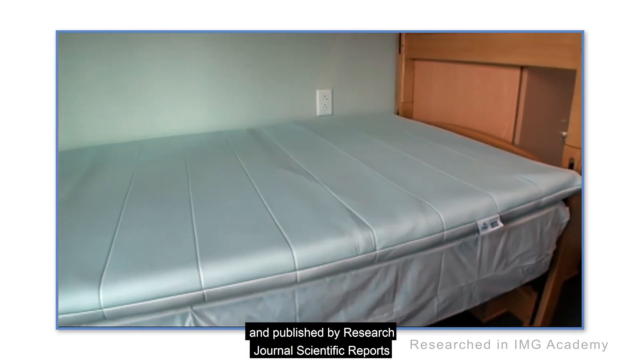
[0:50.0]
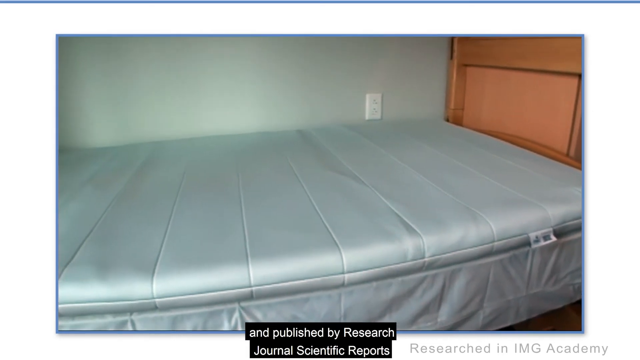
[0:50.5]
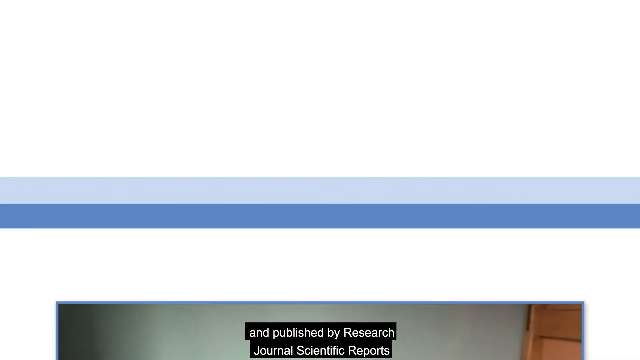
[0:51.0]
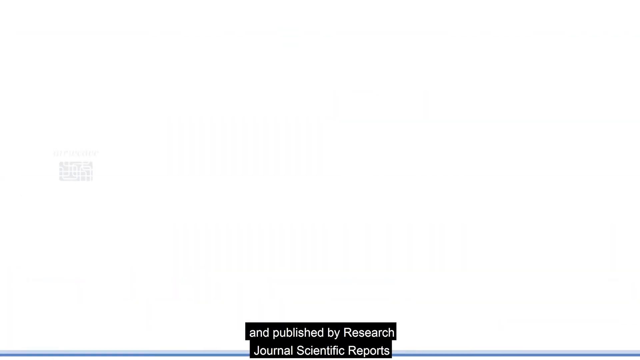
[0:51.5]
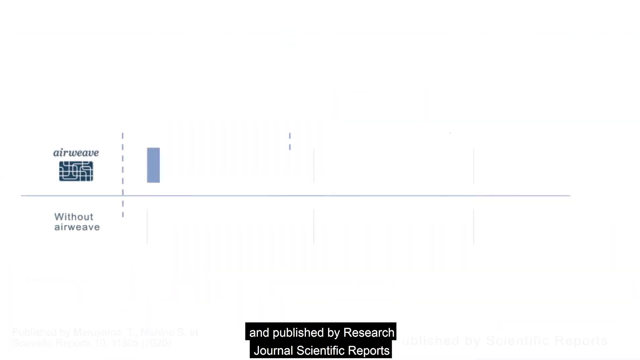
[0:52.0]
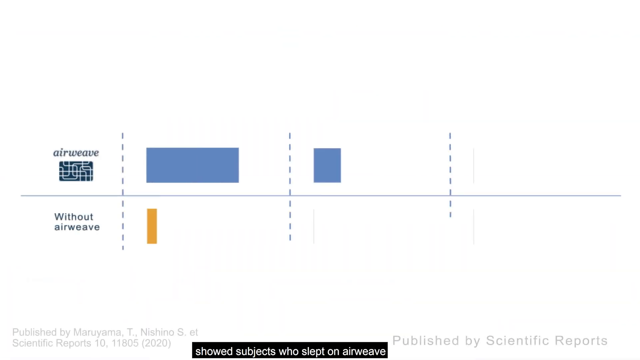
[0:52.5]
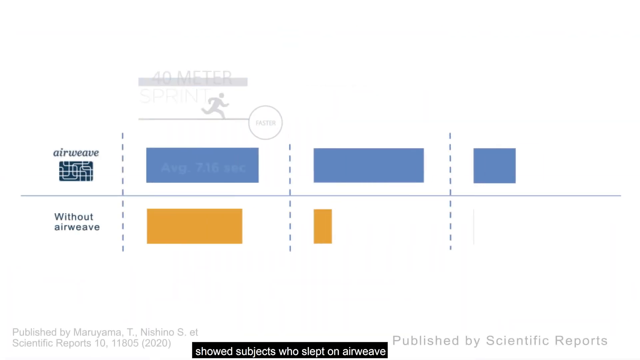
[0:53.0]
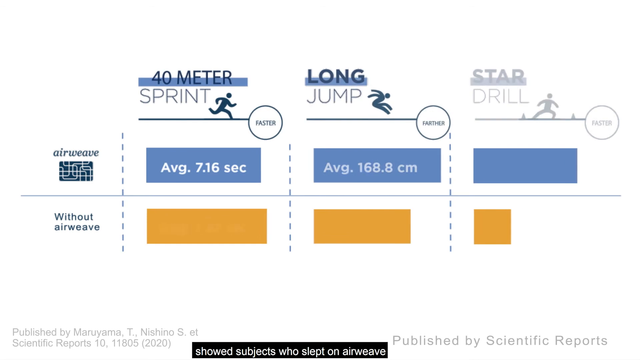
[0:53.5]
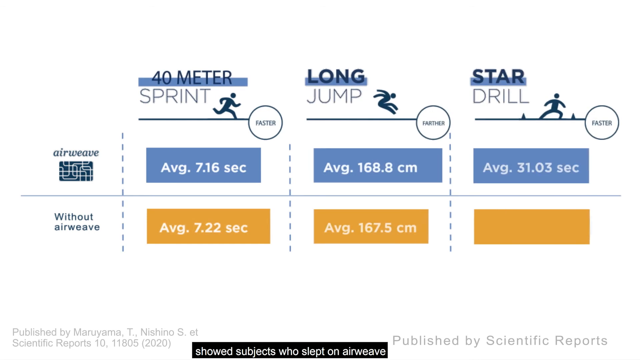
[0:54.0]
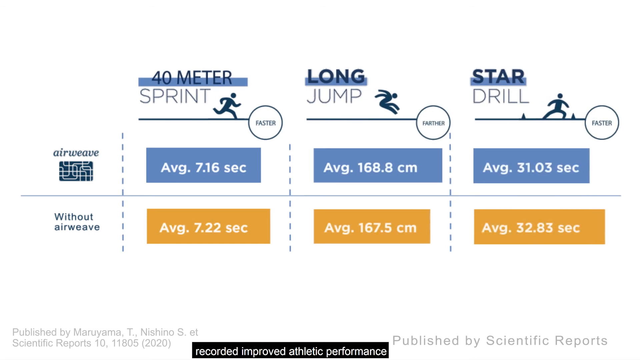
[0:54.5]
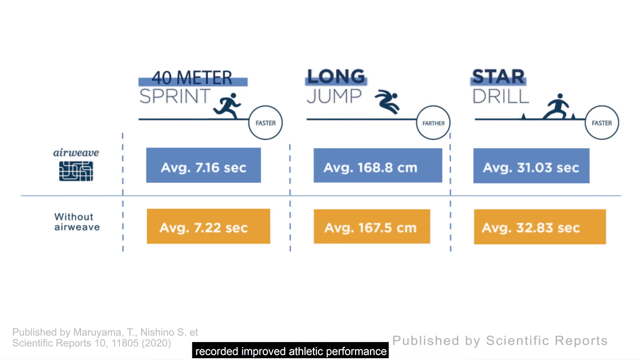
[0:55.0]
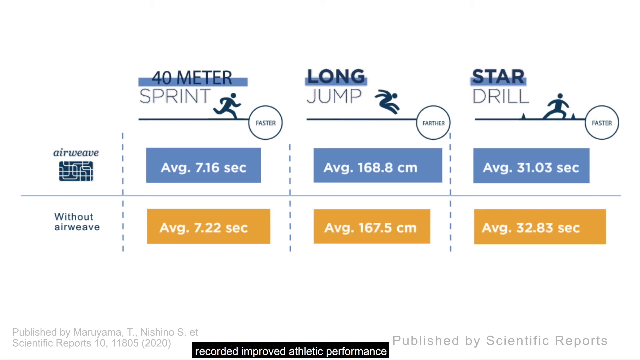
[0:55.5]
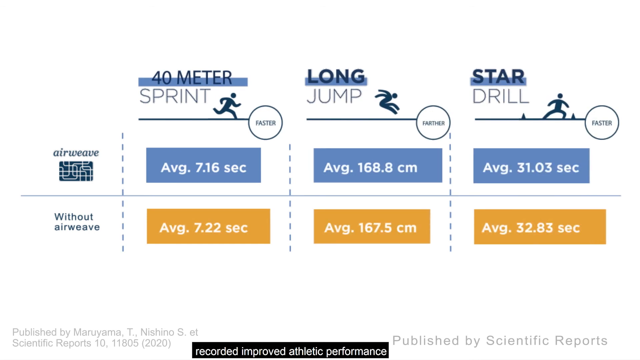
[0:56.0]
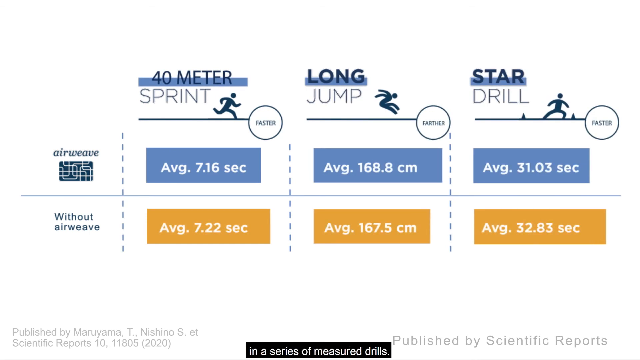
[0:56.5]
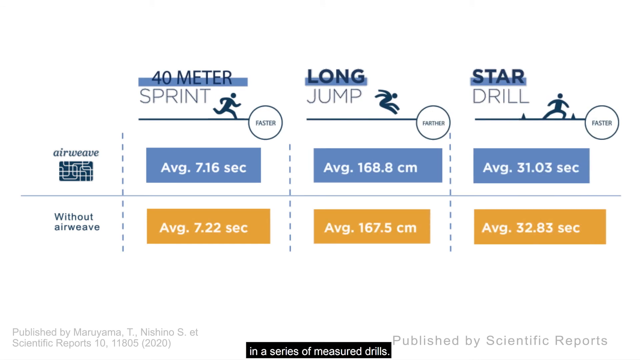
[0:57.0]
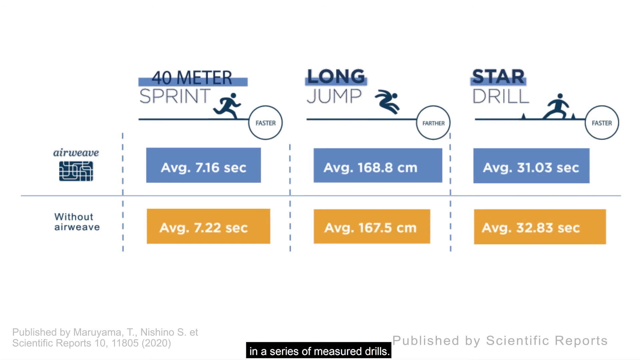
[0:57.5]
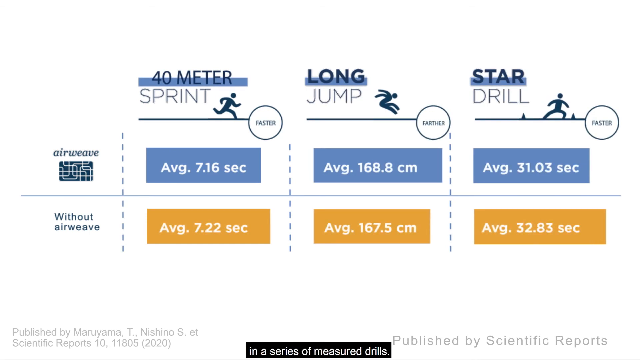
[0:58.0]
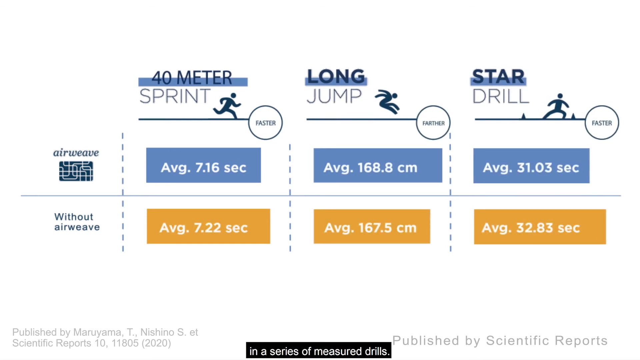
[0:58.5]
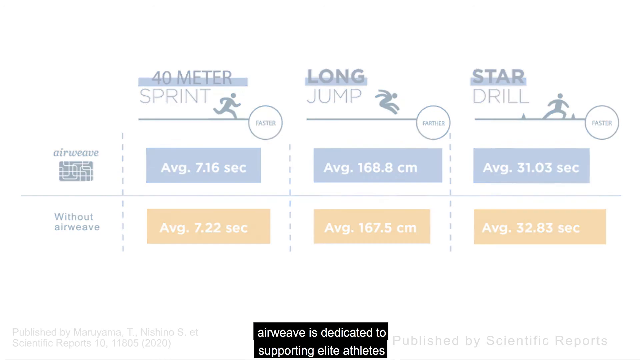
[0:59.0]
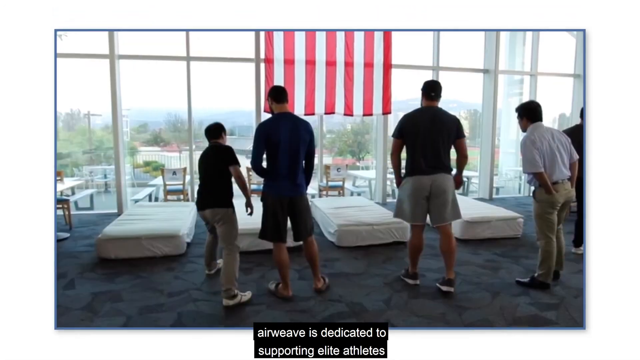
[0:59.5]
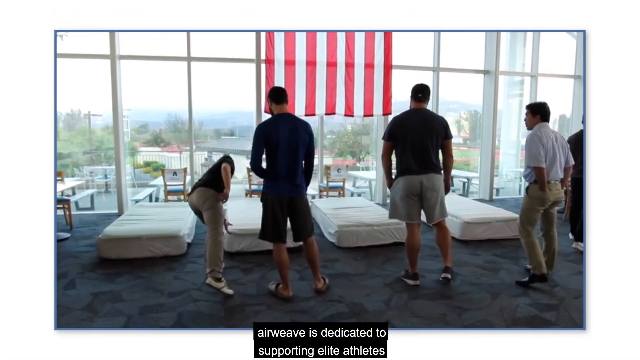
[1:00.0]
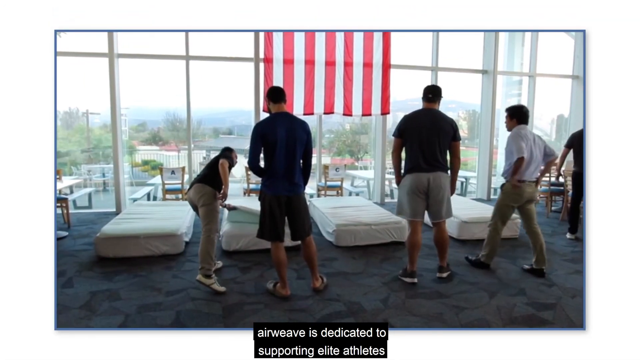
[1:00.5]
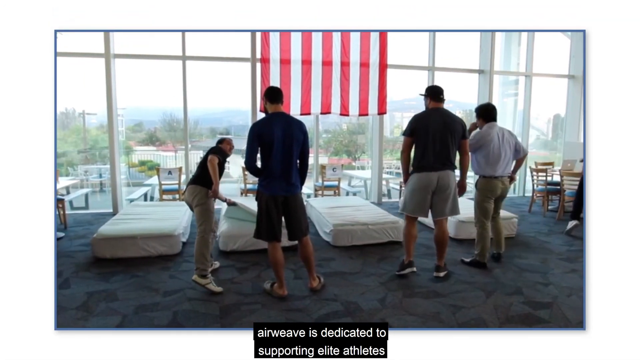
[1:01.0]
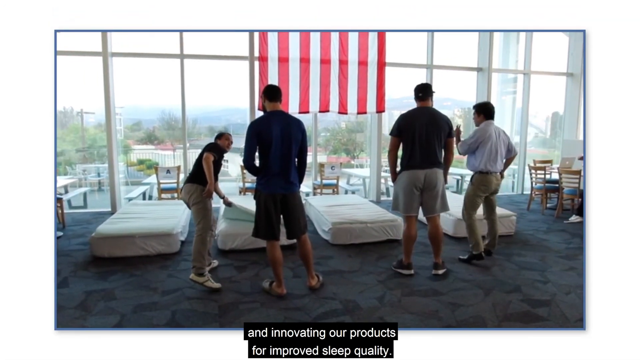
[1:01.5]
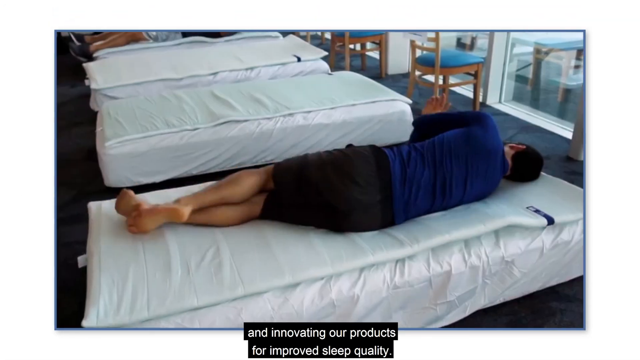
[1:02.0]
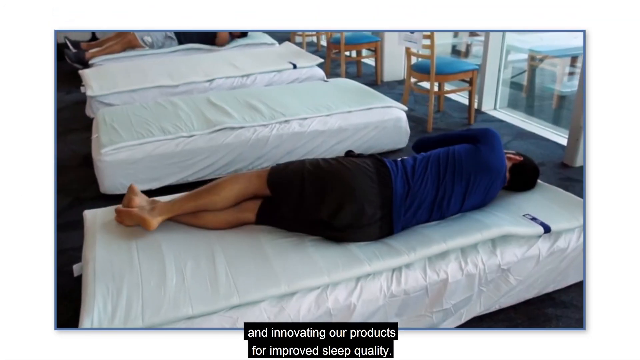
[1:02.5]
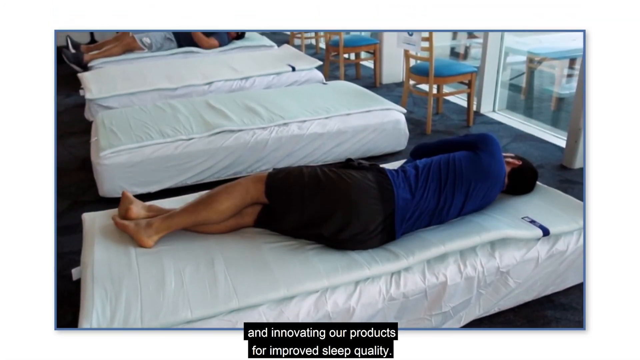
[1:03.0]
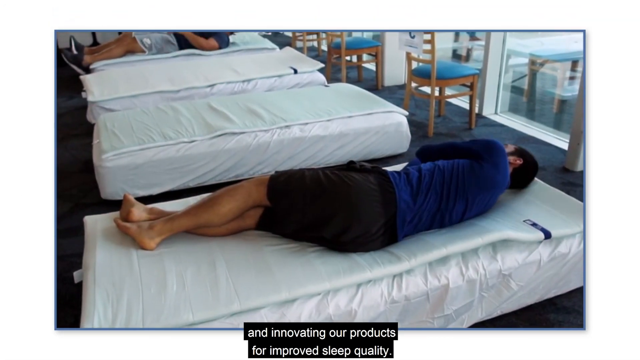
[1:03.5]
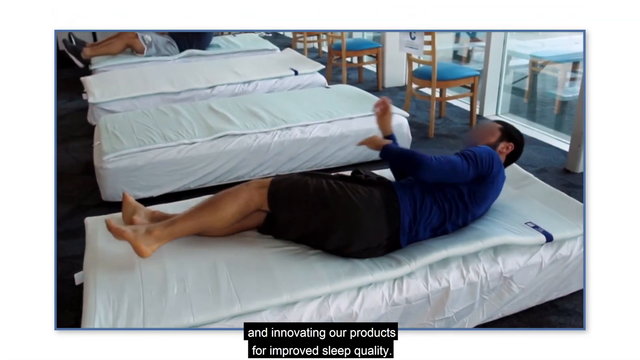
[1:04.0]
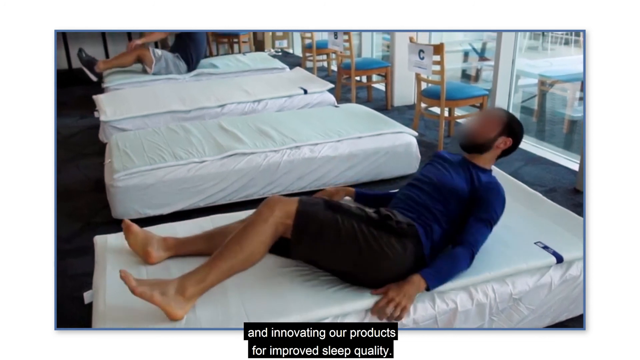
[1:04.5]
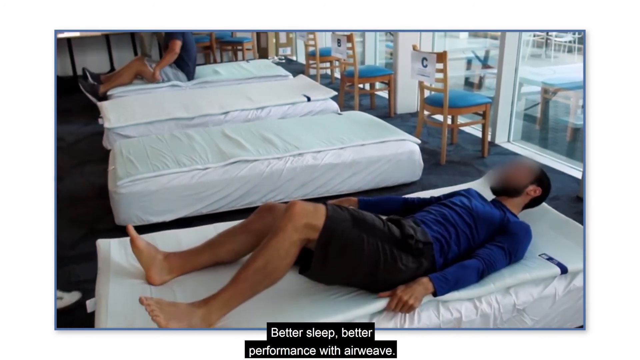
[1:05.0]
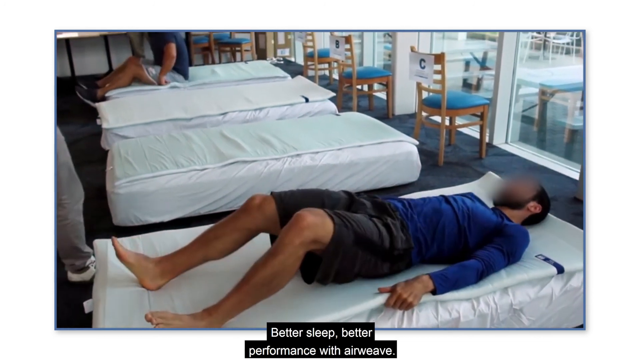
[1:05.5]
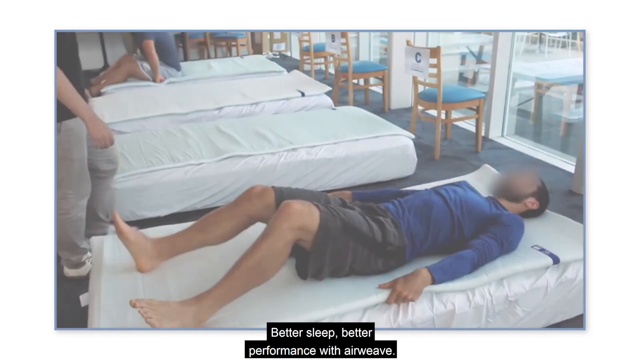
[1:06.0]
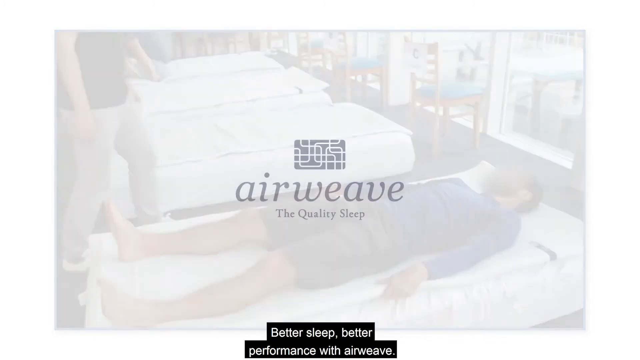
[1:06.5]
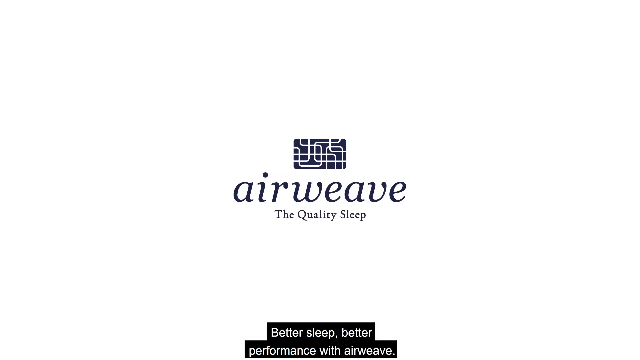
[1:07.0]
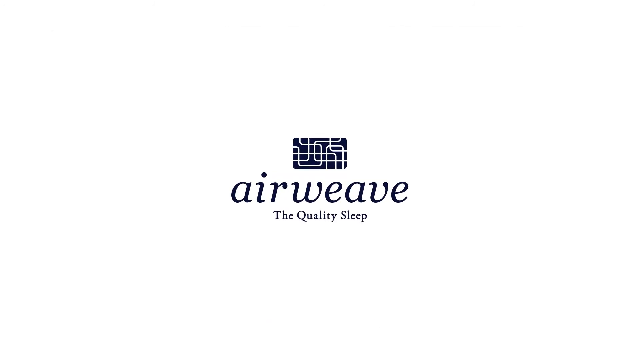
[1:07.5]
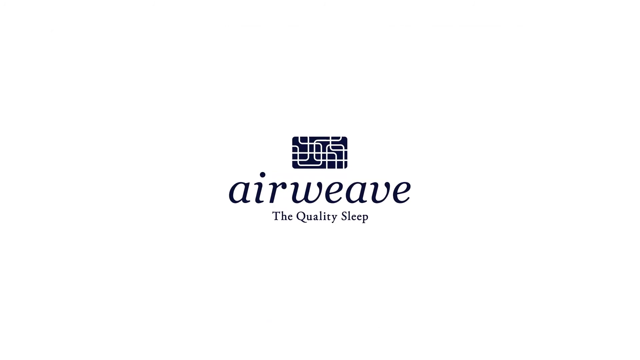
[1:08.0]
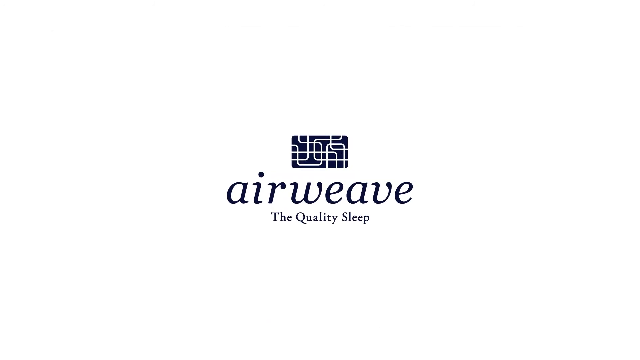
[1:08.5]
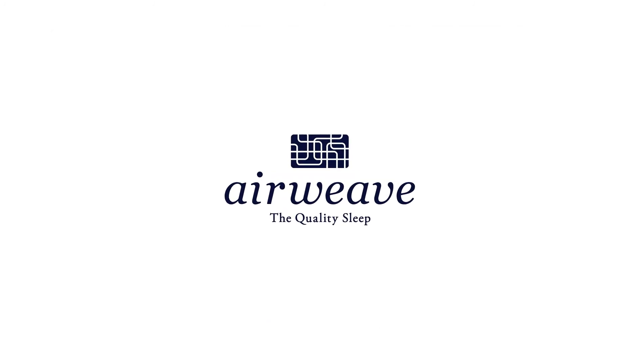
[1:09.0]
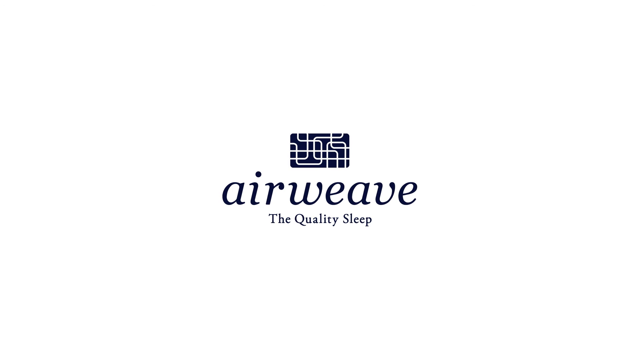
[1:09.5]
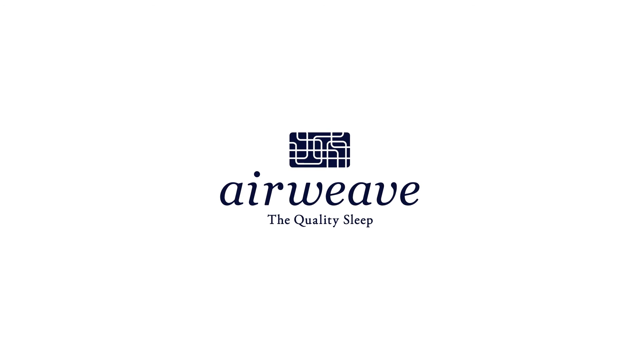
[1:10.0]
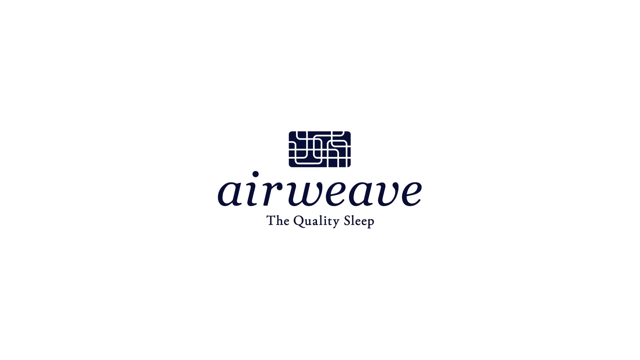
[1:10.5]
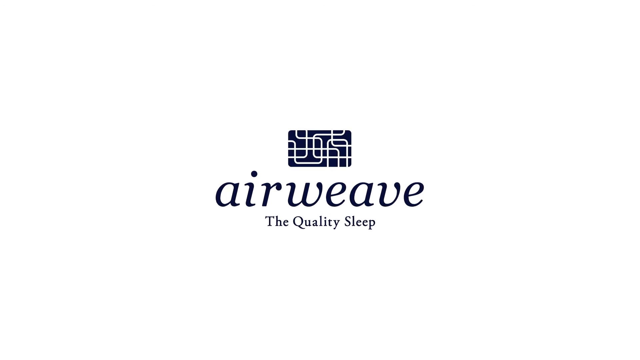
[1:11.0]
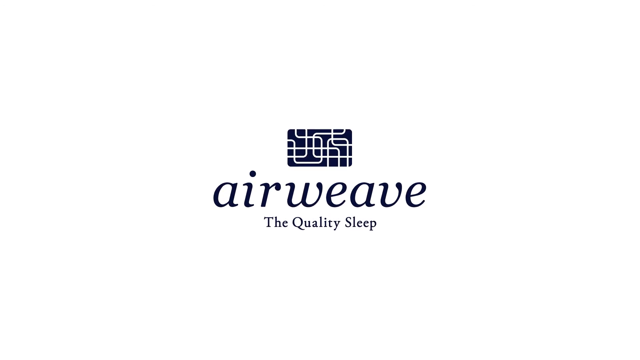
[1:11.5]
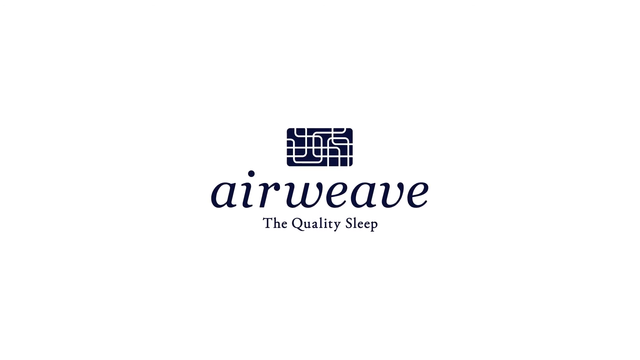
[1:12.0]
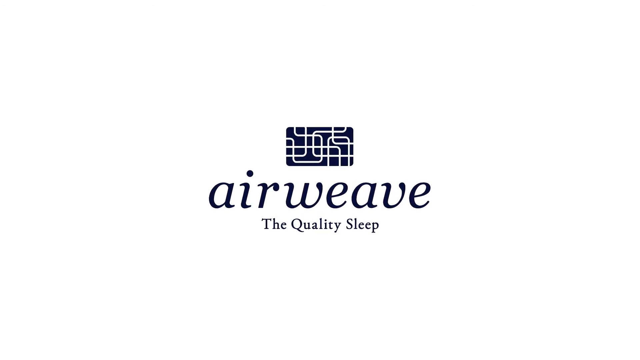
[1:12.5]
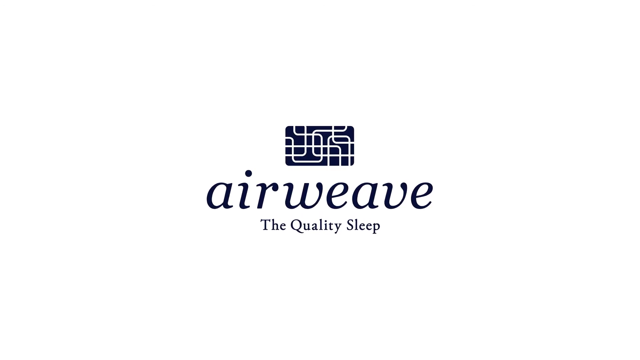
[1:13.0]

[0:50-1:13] A twin-size bed is shown with a mattress on it, what looks like a light gray mattress topper on it as well, and a light brown wooden frame. The screen changes to a chart with three columns and two rows. On the left side, the first row reads "airweave" and the row underneath reads "without airweave." The columns are labeled with different exercises: "40 meter sprint," "long jump" and "star drill." Each cell contains different times and measurements for the exercises with and without an Airweave mattress. The scene changes to what looks like a large furniture store, where four small white mattresses lie on the floor, each with some type of thin mattress topper on it. What looks like a salesman picks up a mattress topper and shows it to a customer. Two men then lie on the furthest of the four beds, as if testing them out, and then both get up; their faces are blurred out. The screen changes to a white background with a logo of a dark blue rectangular box with white lines running all over it, and underneath it reads "Airweave, the quality sleep."